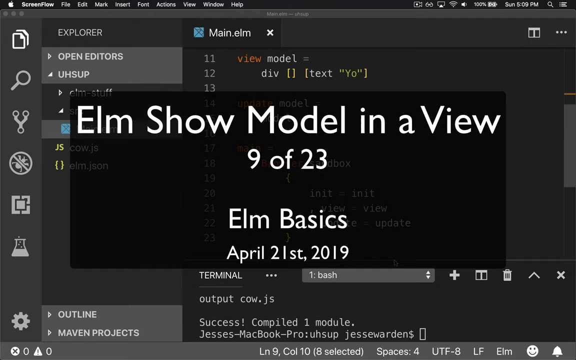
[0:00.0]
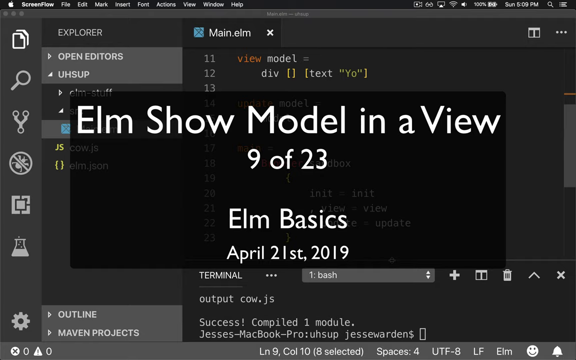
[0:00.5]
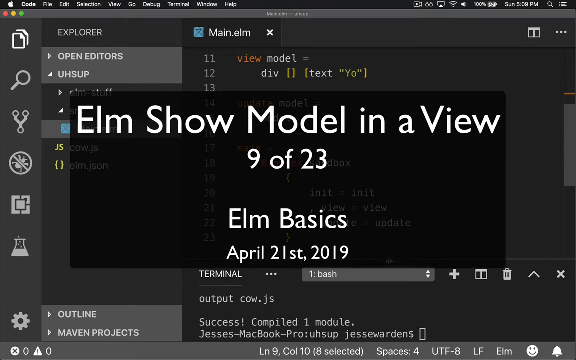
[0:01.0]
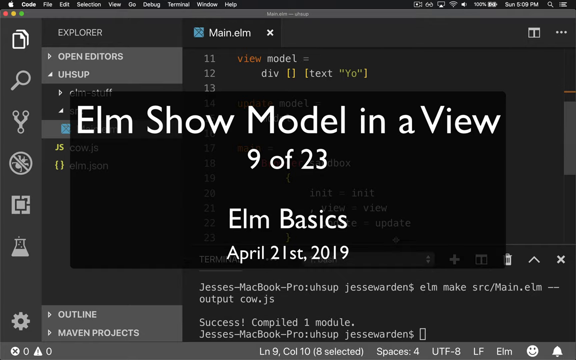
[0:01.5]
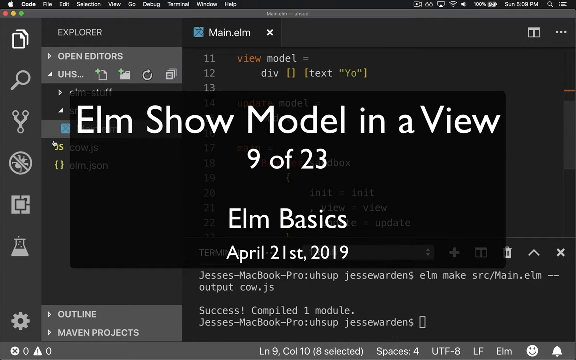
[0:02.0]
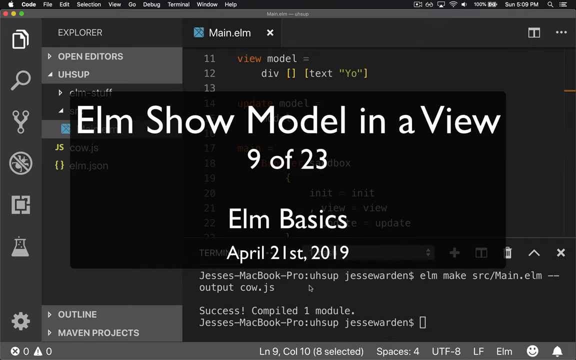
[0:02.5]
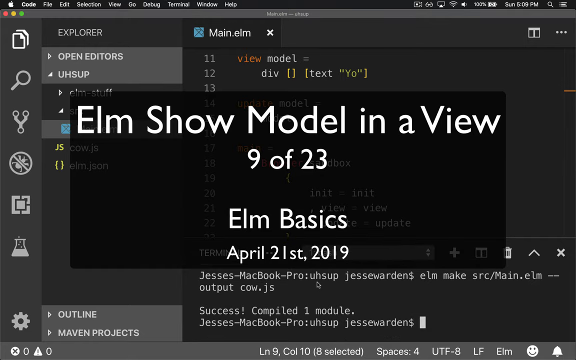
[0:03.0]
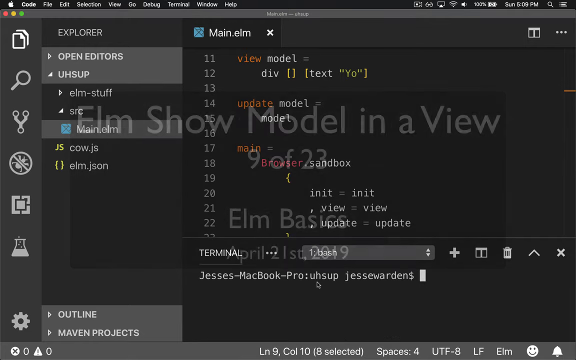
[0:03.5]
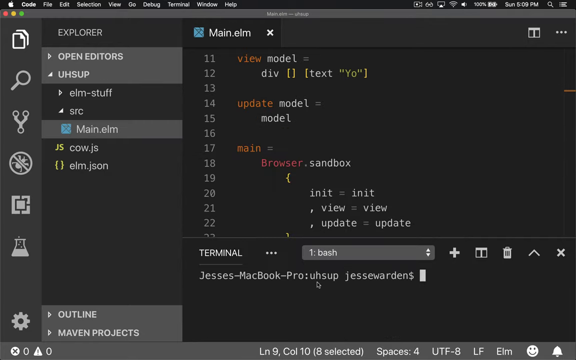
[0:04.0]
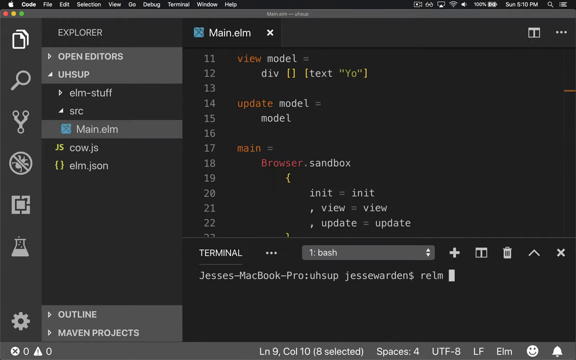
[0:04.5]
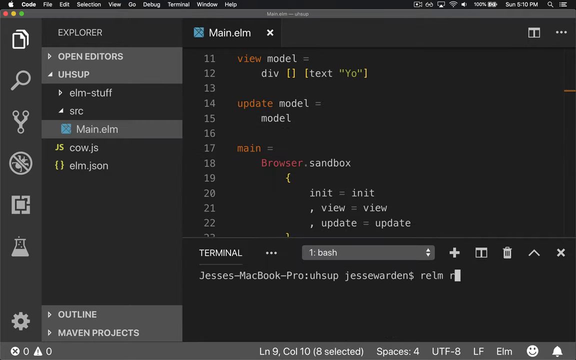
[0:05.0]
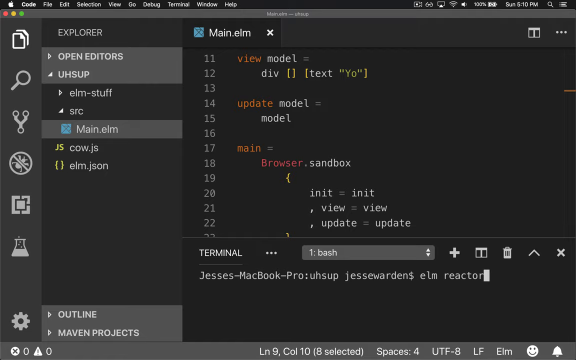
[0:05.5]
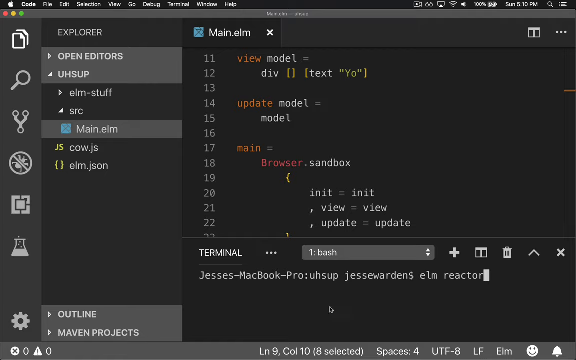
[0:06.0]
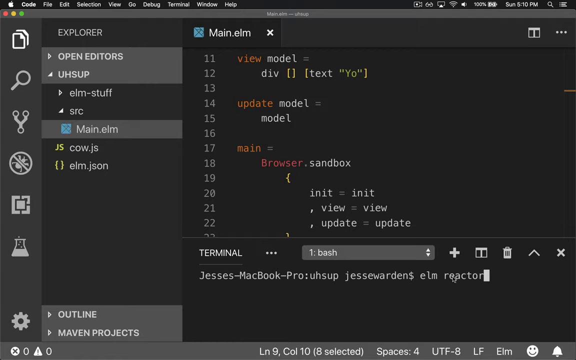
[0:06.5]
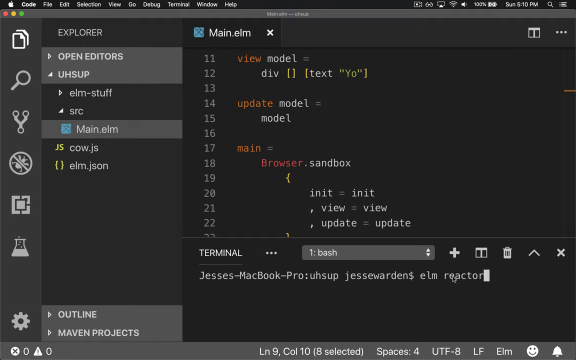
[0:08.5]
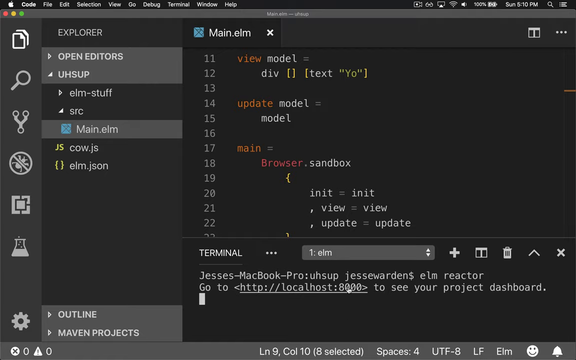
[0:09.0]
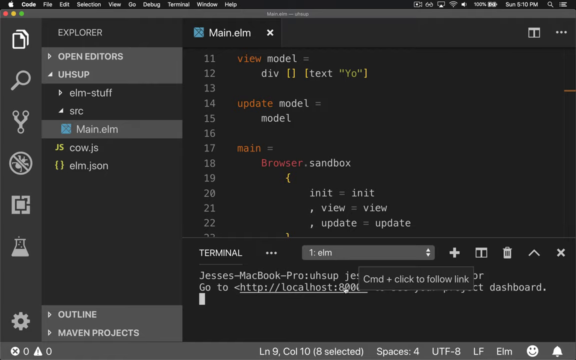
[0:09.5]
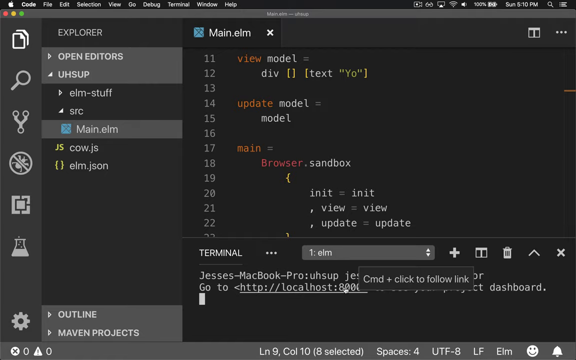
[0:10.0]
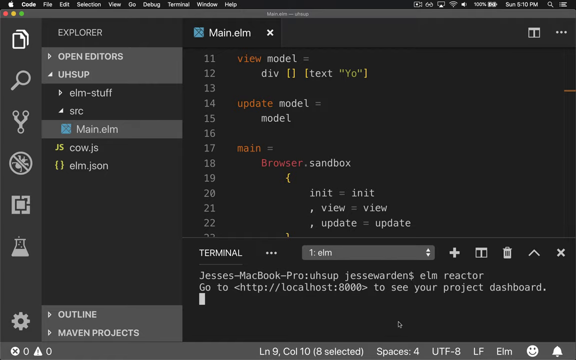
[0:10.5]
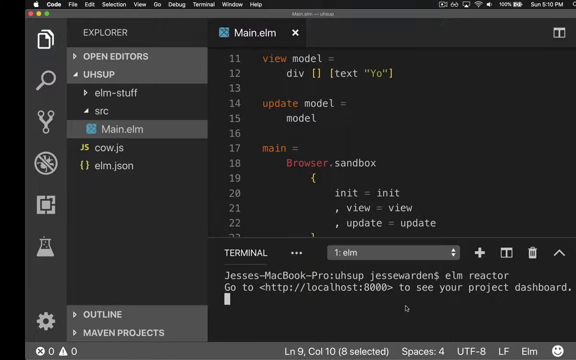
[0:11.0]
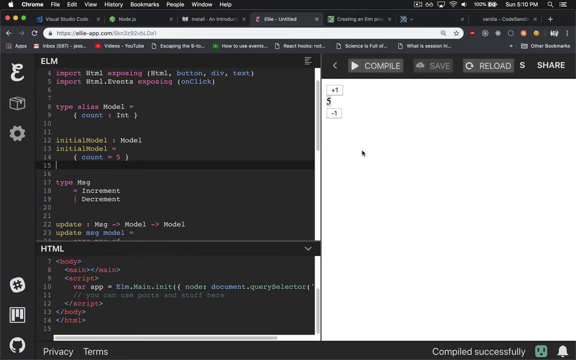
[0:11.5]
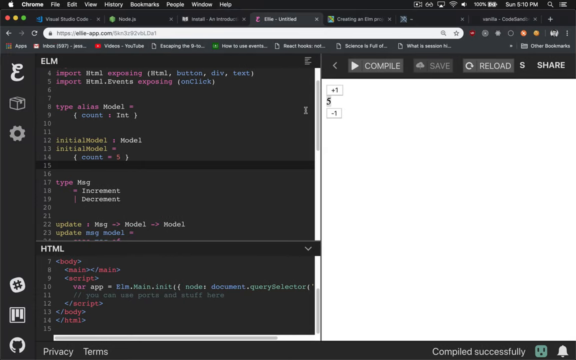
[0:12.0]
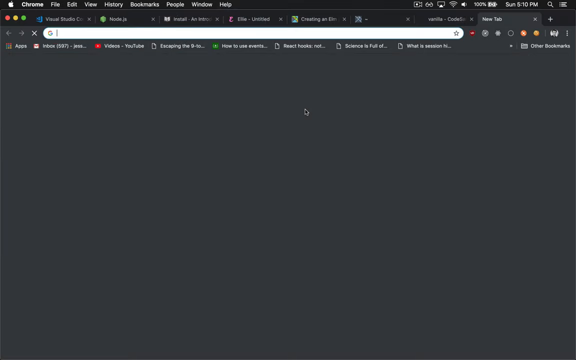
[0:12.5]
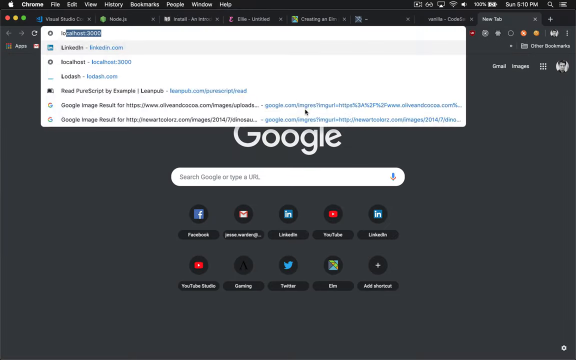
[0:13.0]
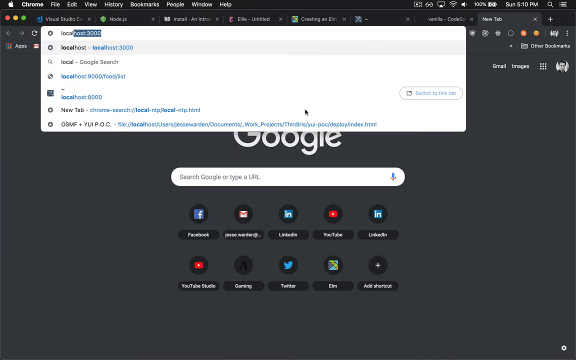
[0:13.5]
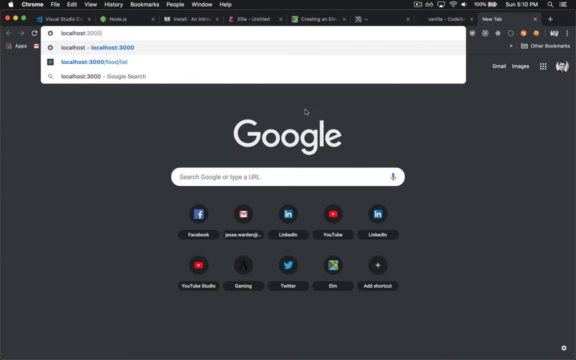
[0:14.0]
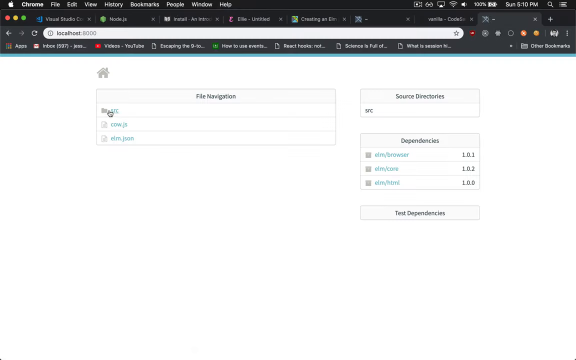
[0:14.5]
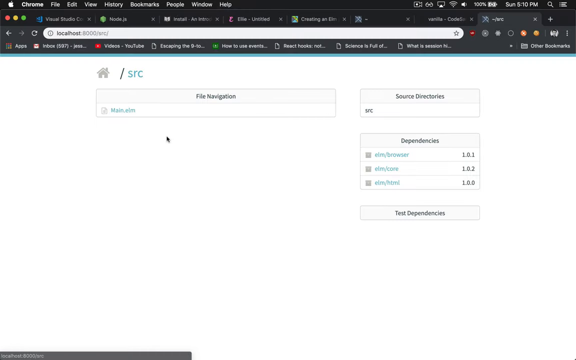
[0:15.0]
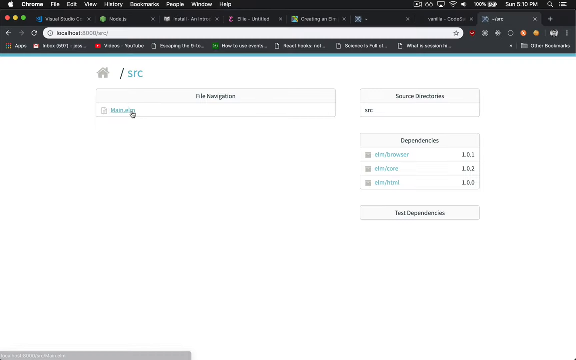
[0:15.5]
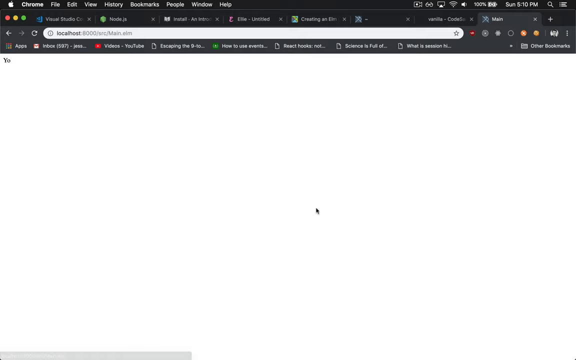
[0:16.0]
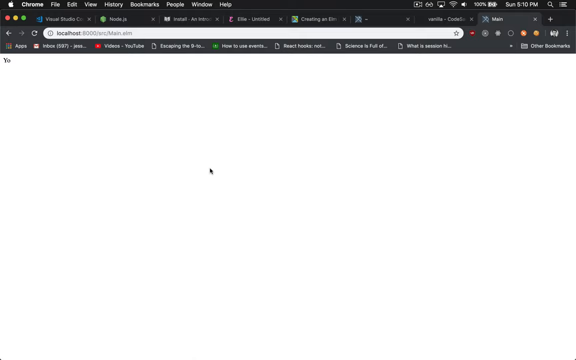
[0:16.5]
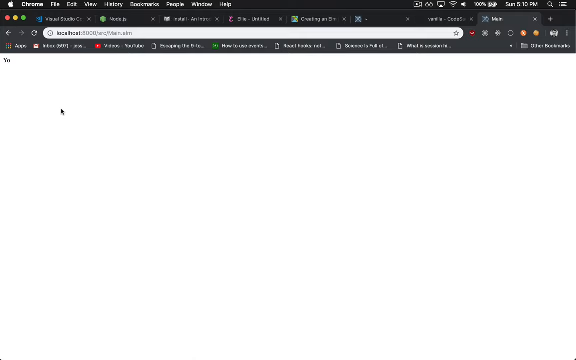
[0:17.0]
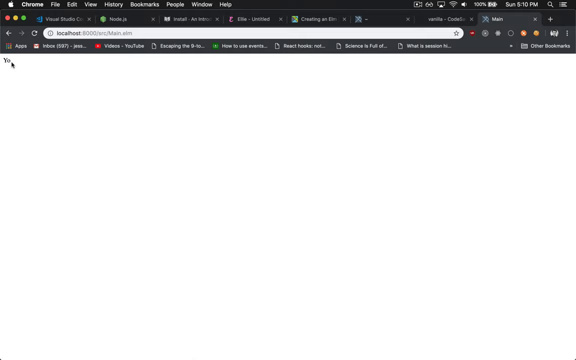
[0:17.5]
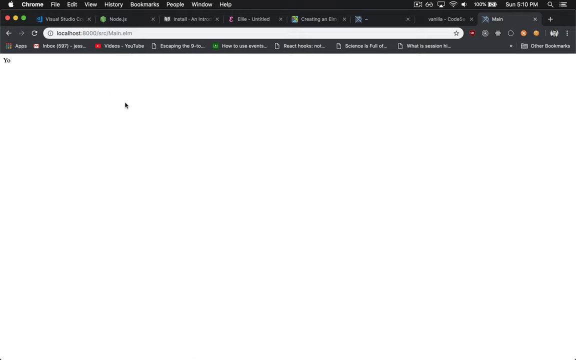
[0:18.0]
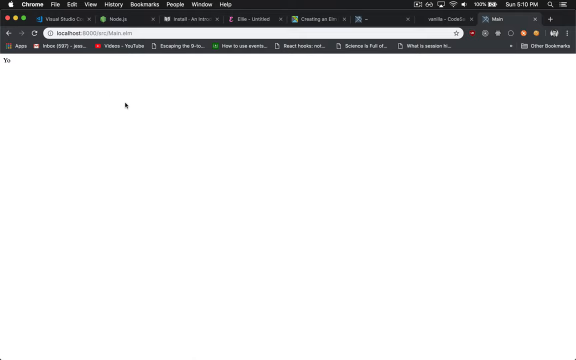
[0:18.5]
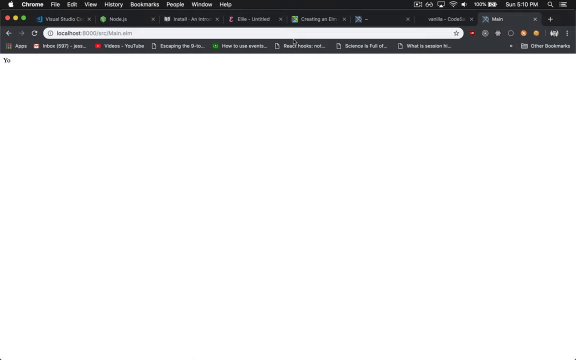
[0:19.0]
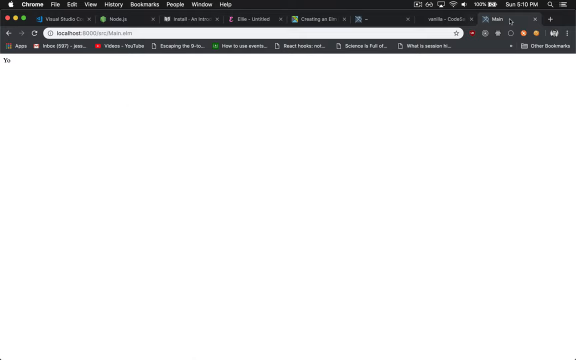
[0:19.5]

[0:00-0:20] A code editor on macOS shows several pieces of code, including a view model, a div, an update model, the model itself, and a main method with a browser sandbox inside it, in a main.elm file. The code editor environment also contains a cow.js file and an elm.json file. The person uses the elm reactor command in the console, and it then says "go to localhost port 8000". The person goes to localhost port 8000, where a source folder, a file navigation section and a dependency section are visible, along with the text they wrote, "yo". The environment appears to be a VS Code terminal on macOS, showing their Elm project overview or Elm model. No physical subjects appear; the setting is inside the VS Code-like application and a web browser that is opened afterwards.